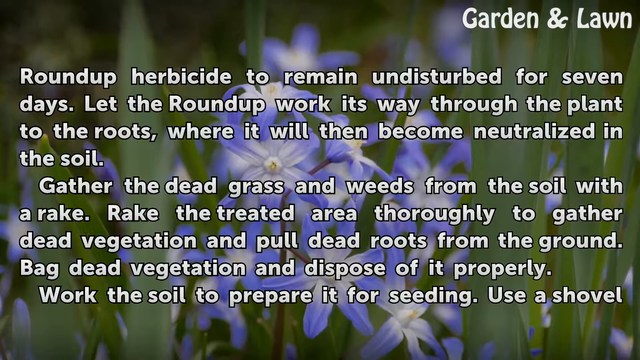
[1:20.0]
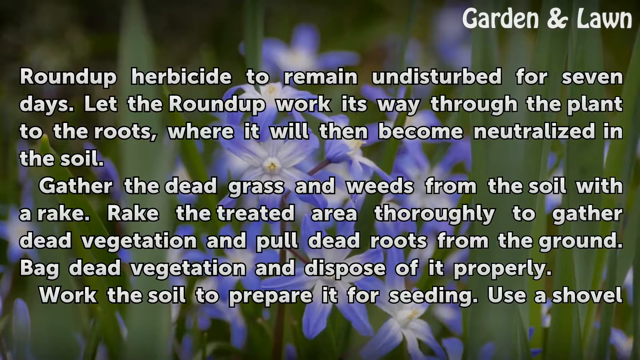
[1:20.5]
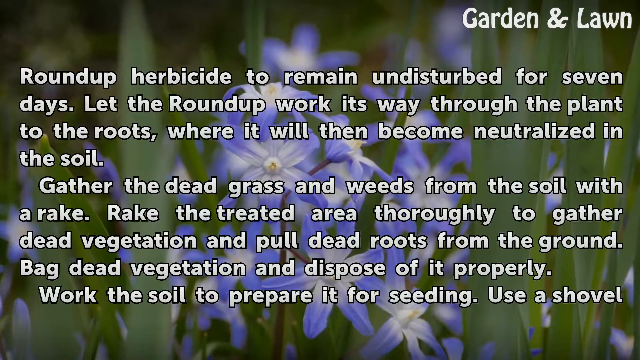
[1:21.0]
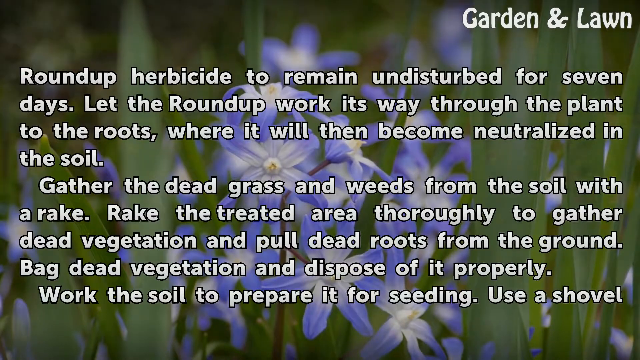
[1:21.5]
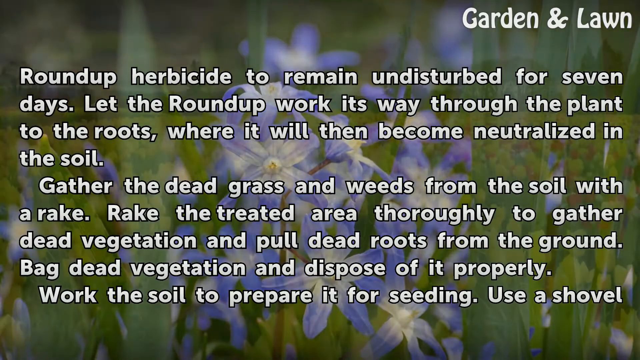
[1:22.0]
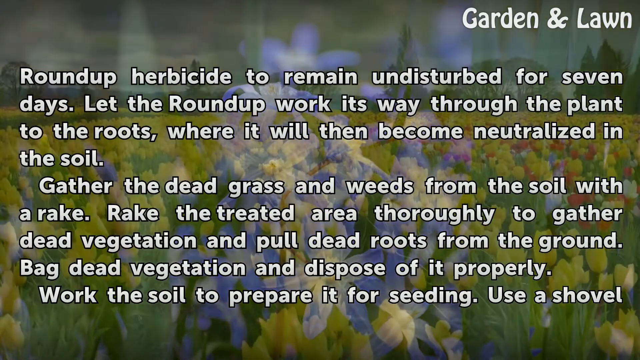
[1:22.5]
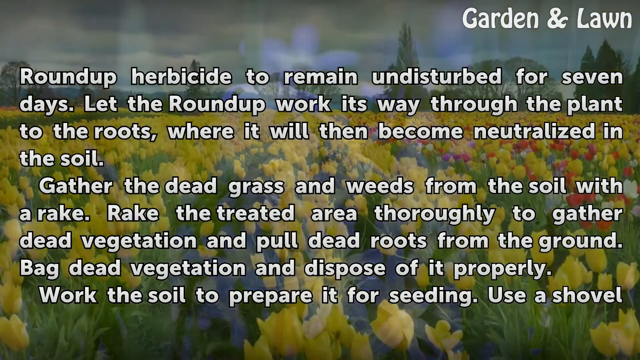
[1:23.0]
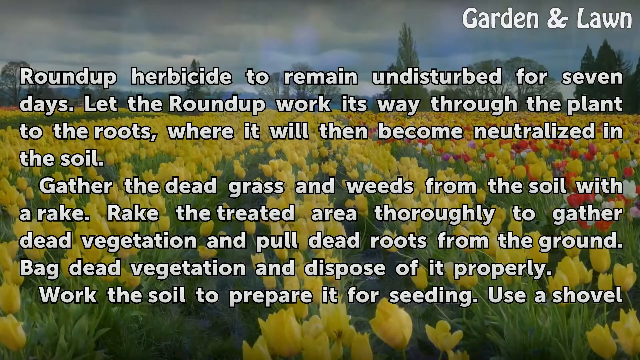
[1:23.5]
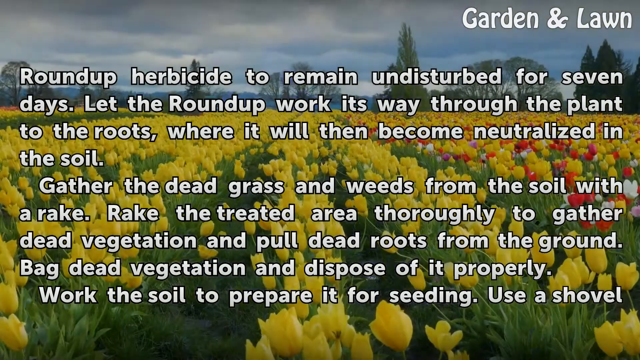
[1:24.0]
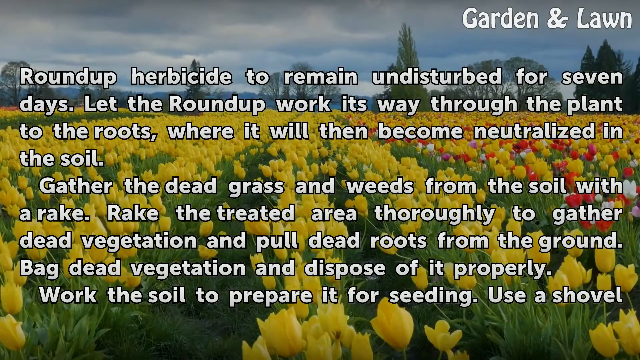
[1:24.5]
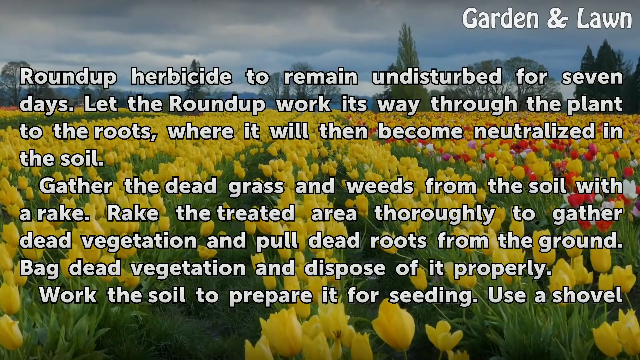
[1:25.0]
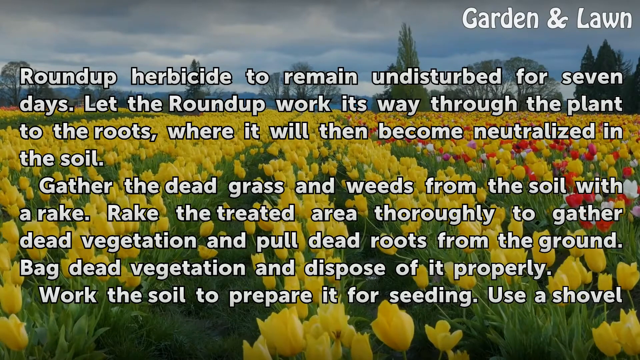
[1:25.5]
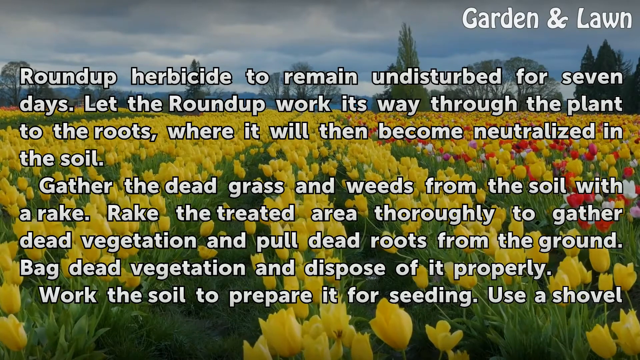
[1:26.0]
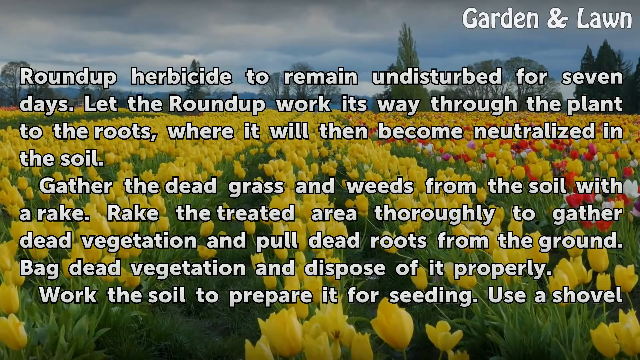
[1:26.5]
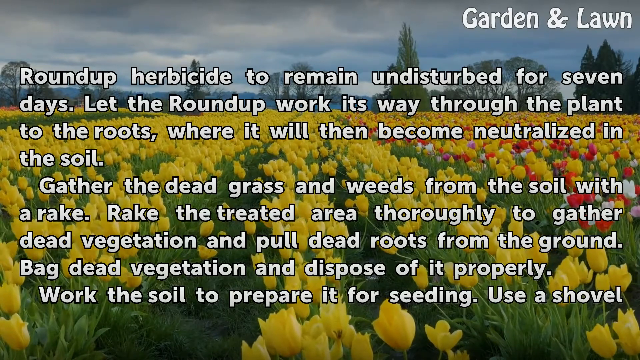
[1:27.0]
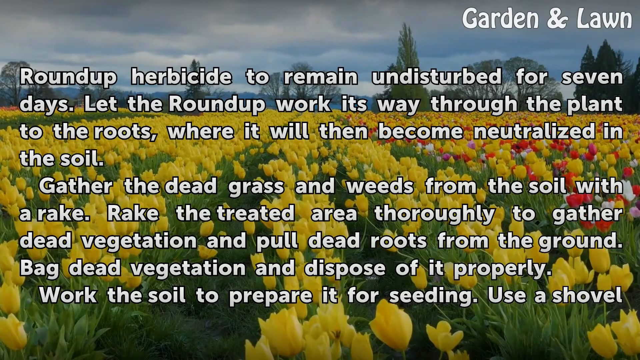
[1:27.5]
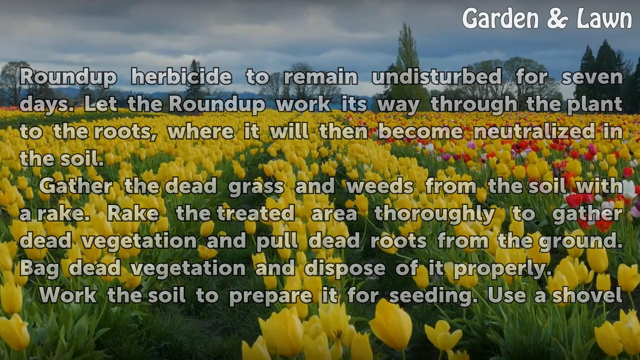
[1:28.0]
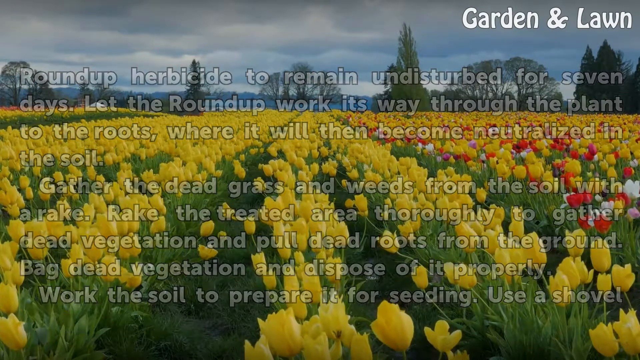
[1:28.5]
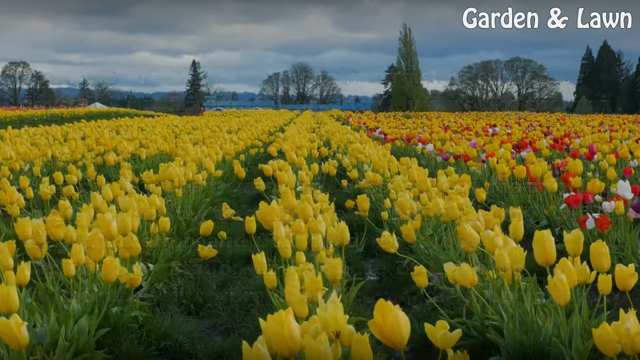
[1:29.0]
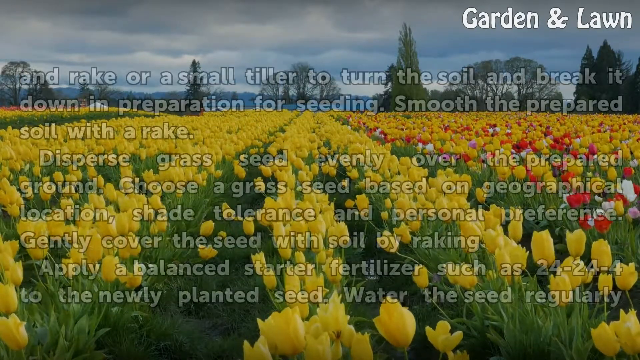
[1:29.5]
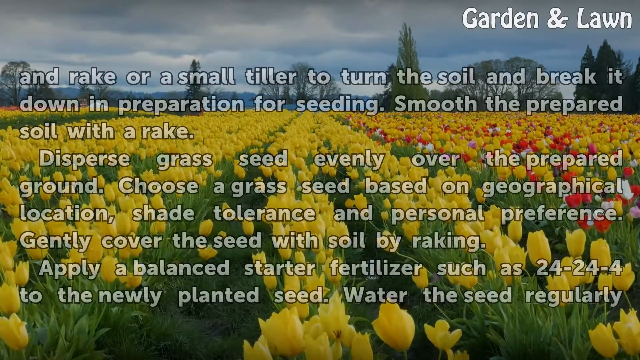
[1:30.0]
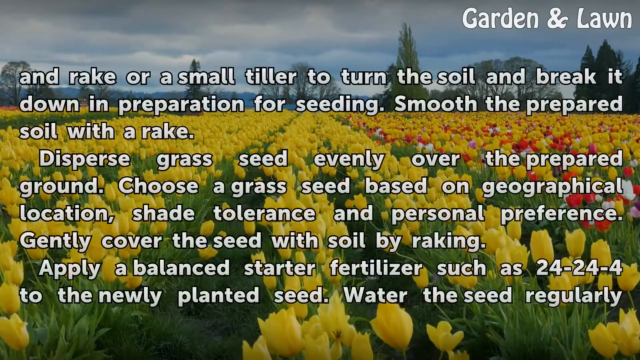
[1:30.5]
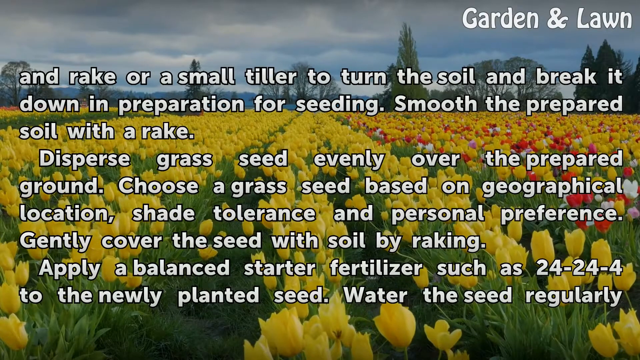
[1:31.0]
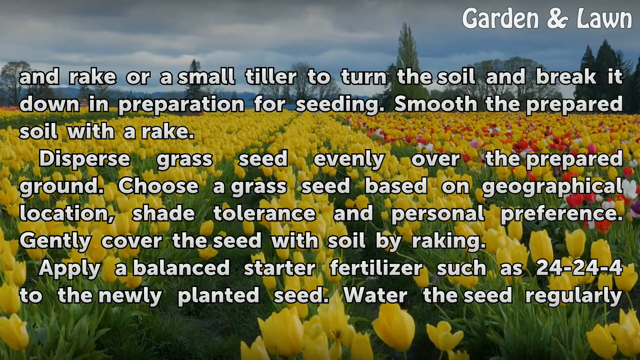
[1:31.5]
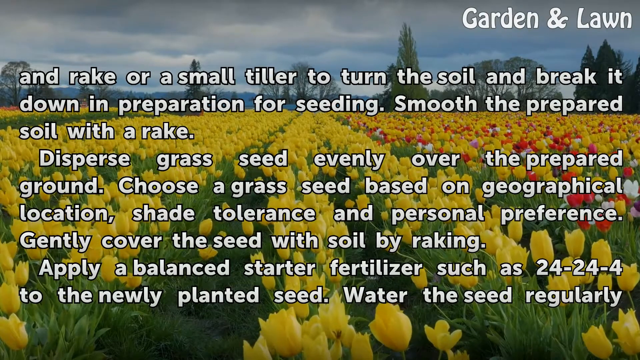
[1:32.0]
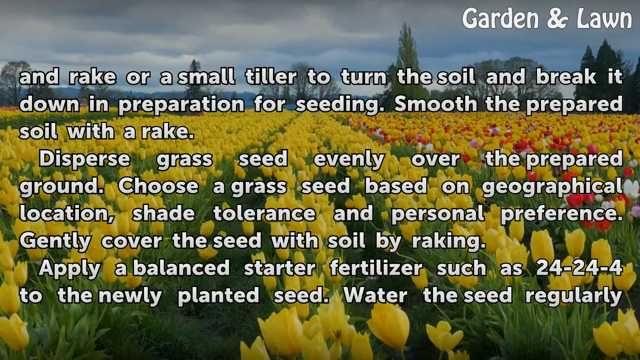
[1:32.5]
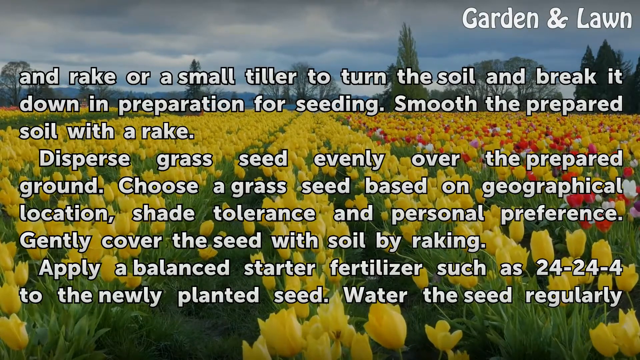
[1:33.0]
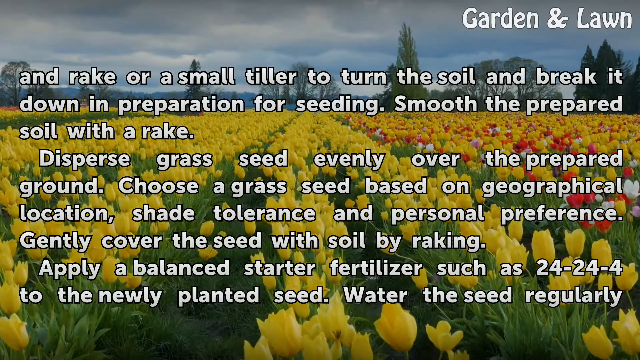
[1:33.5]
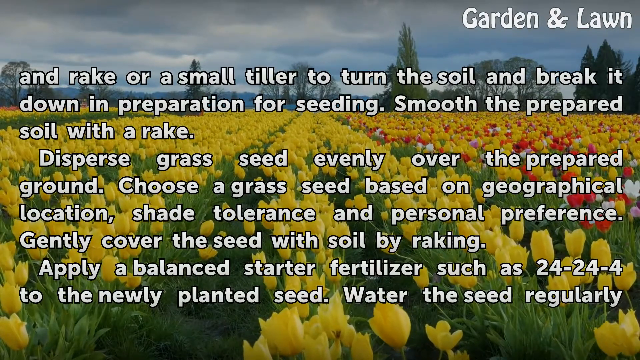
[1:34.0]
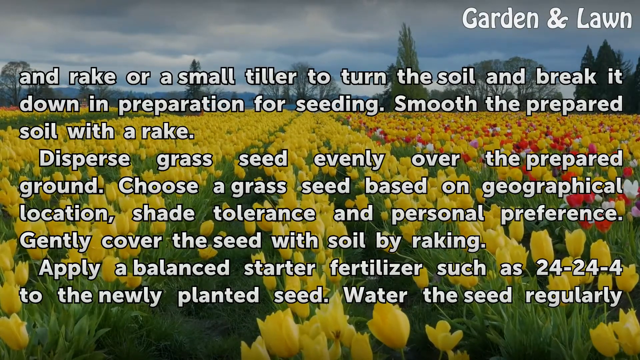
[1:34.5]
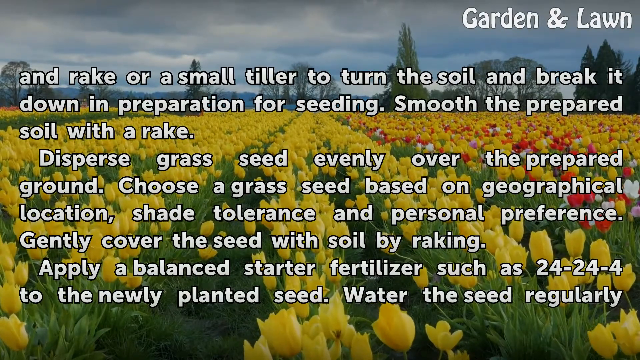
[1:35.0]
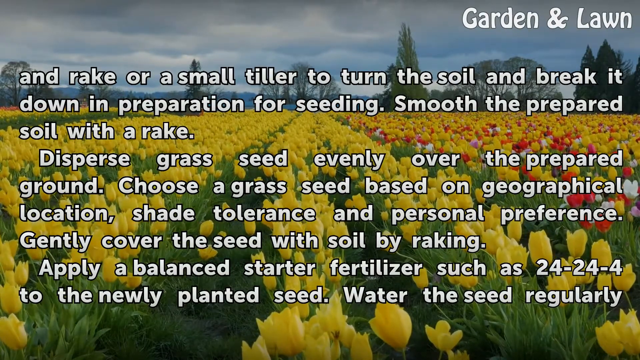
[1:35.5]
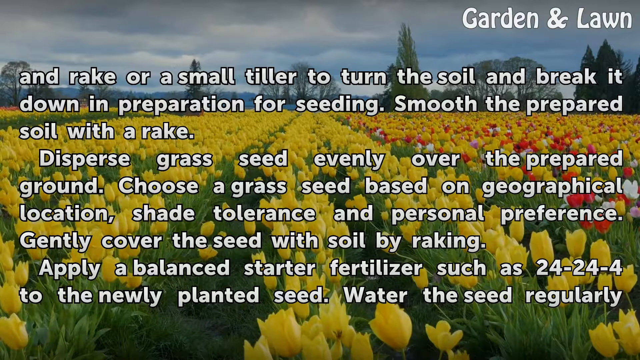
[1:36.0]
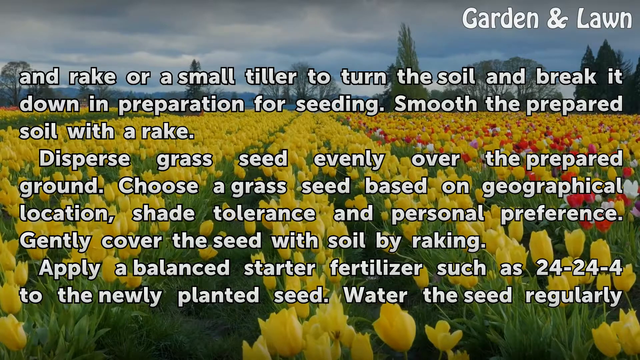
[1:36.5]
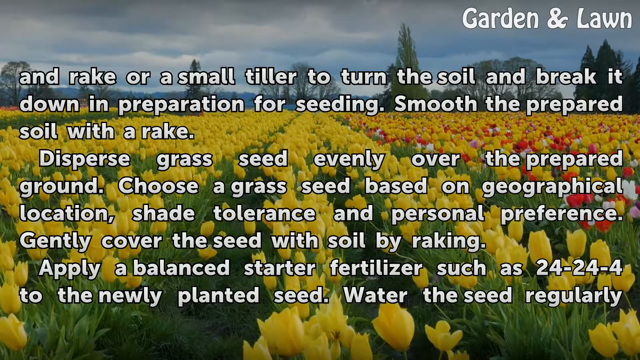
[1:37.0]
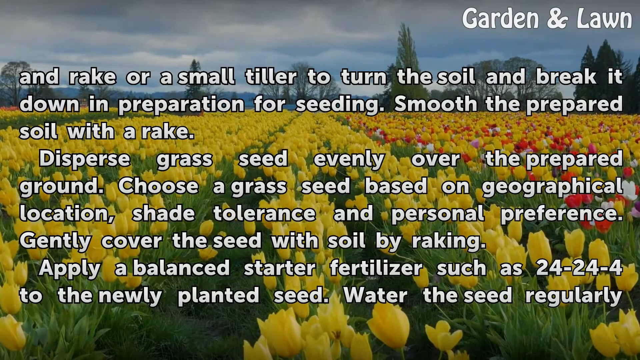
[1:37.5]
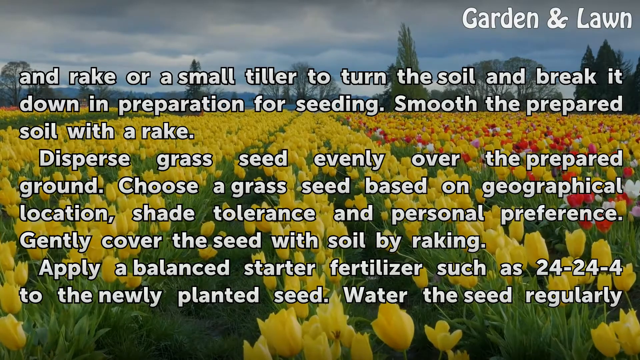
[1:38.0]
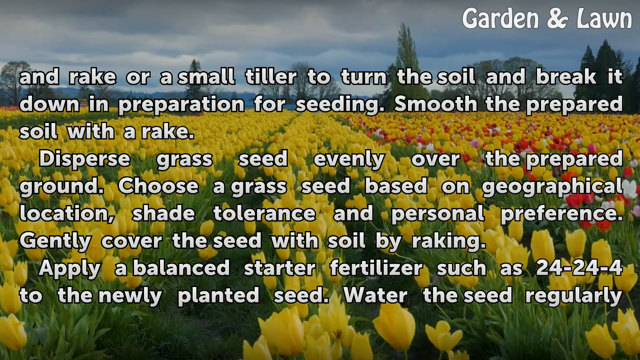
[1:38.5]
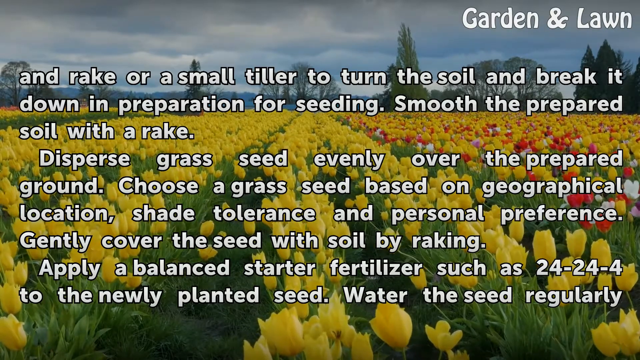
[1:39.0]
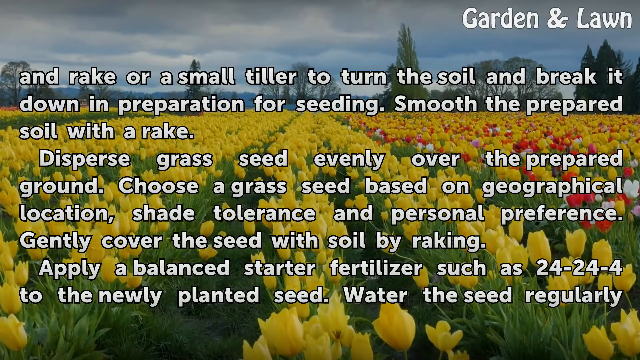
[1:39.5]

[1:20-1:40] Text reads "300 plus sign language unlimited potential" with website addresses for NAD, BDA (UK) and Deaf Australia, alongside three hands in different shades of blue: navy blue, light blue and sky blue. After that message, an orange flower appears that looks fresh and healthy, with a green background behind it. A message appears in front of the flower saying Roundup is a herbicide widely used to control the unwanted growth of grass, weed and small brush, used in both residential and commercial applications, that its effect is the dieback of grass and weed to which it was applied, and that seeding an area can reverse the effect following dieback. Purple flowers are behind the message. Next, a pink flower appears with "things you will need" listing a rake, trash bag, small tiller, grass seeds, straw, fertilizer and water. Another message follows: leave the herbicide undisturbed for seven days, let the Roundup work its way through the plant to the root where it becomes neutralized in the soil, gather the dead grass and weed from the soil with a rake, pull up dead roots from the ground, bag the dead vegetation and dispose of it properly, and work the soil to prepare it for seeding. A yellow flower with green behind the message, plus red and white, forms the background. Further instructions say to use a shovel or small tiller to turn the soil and break it down in preparation for seeding, smooth the prepared soil with a rake, disperse grass seed over the prepared ground, choose a grass based on growing location, shade tolerance and personal preference, gently cover the seed by raking, and apply a balanced starter fertilizer.